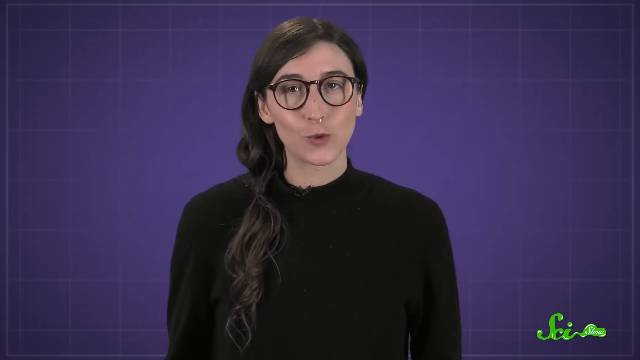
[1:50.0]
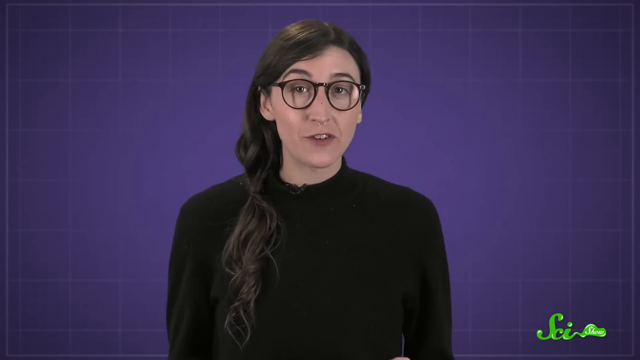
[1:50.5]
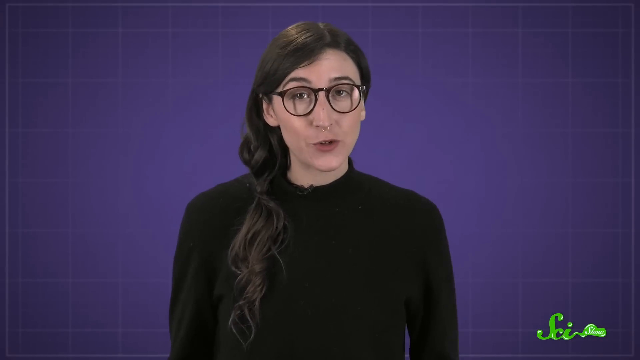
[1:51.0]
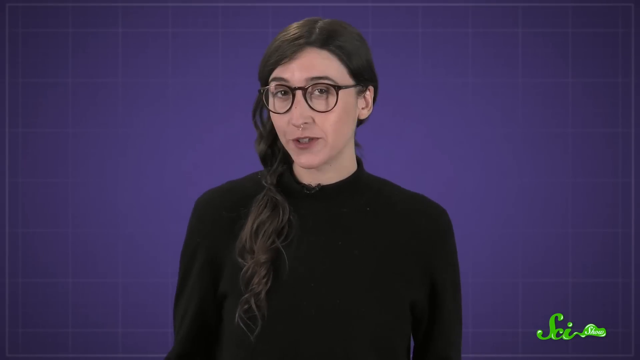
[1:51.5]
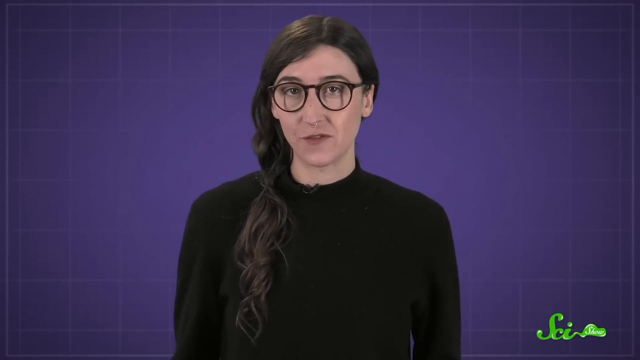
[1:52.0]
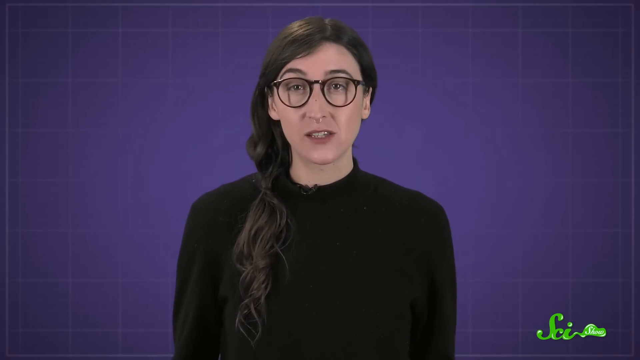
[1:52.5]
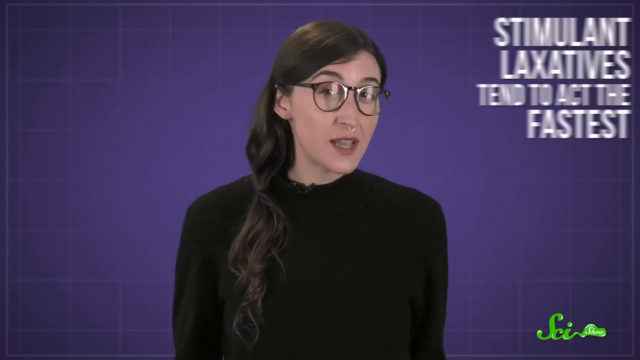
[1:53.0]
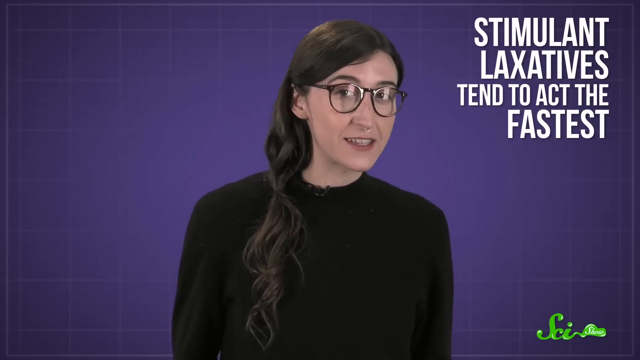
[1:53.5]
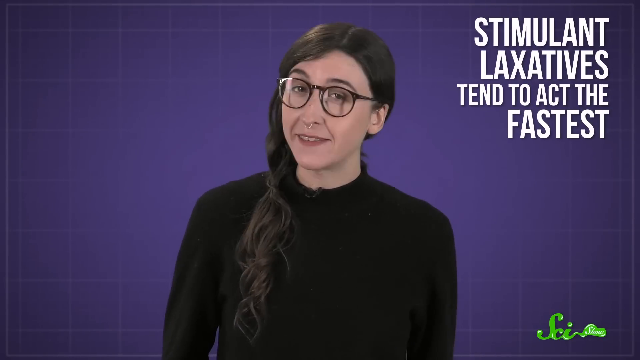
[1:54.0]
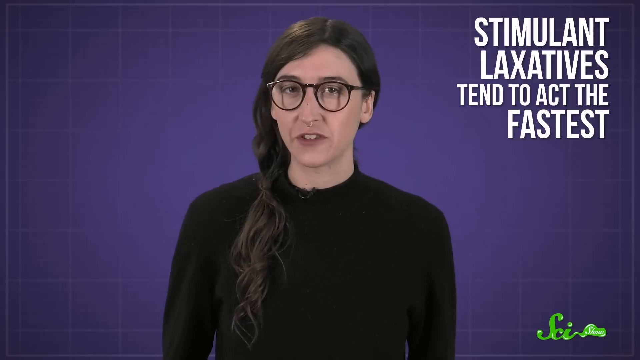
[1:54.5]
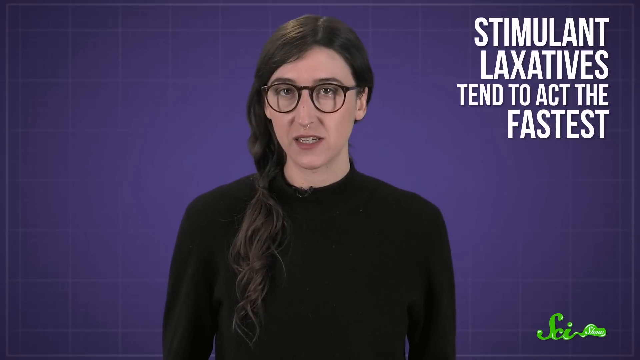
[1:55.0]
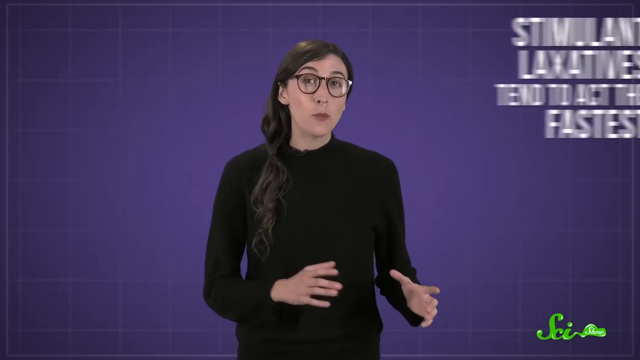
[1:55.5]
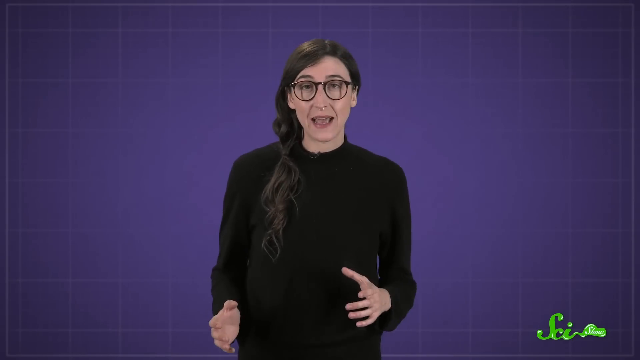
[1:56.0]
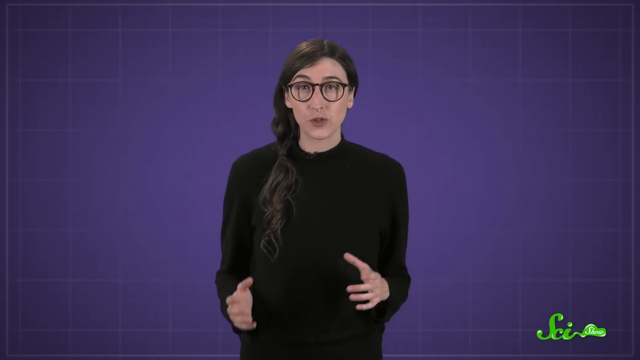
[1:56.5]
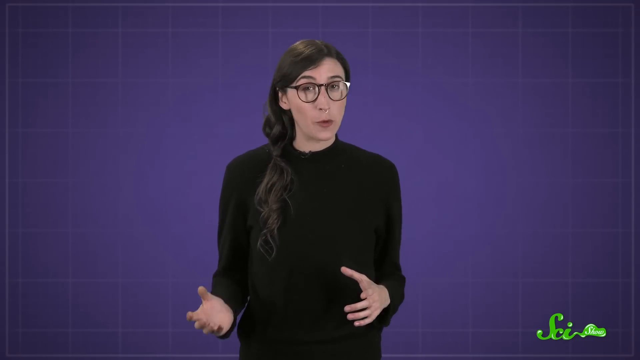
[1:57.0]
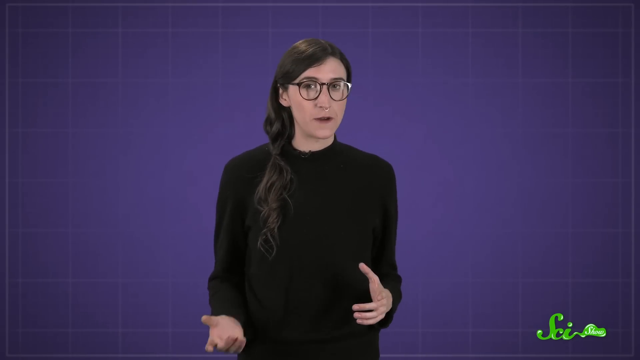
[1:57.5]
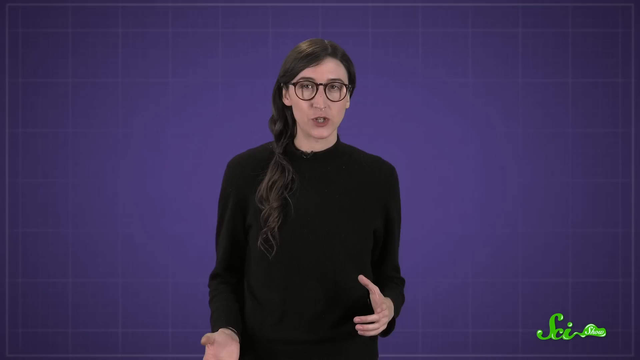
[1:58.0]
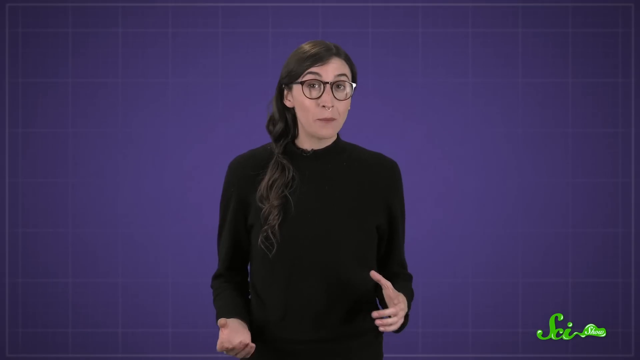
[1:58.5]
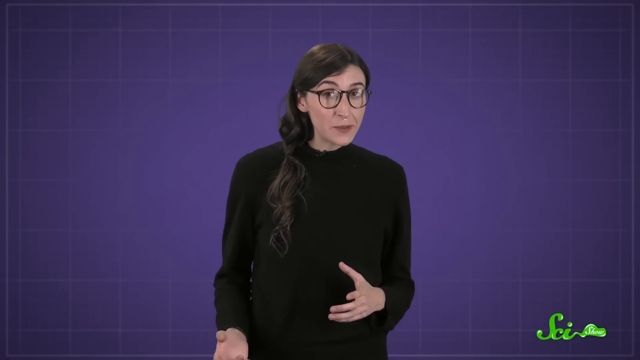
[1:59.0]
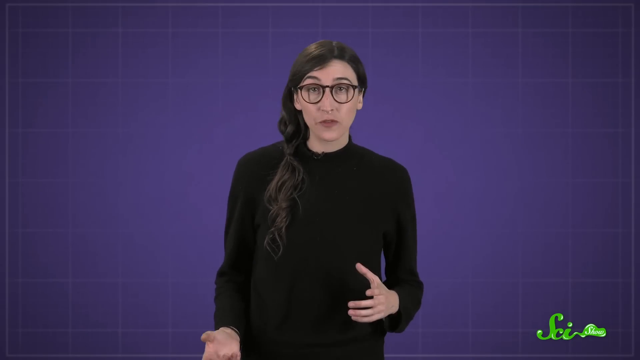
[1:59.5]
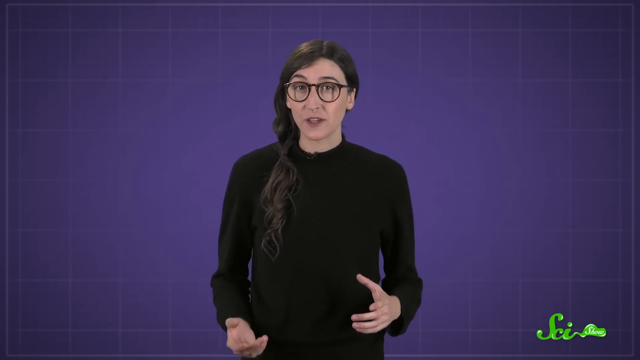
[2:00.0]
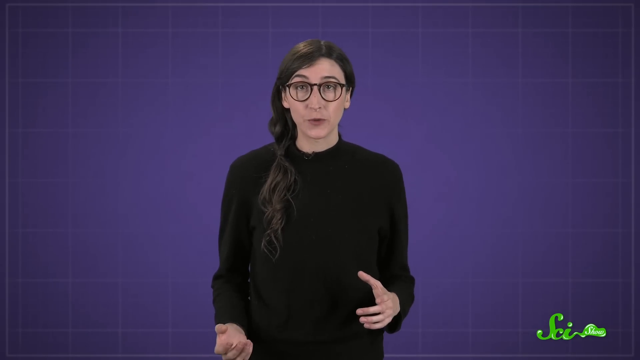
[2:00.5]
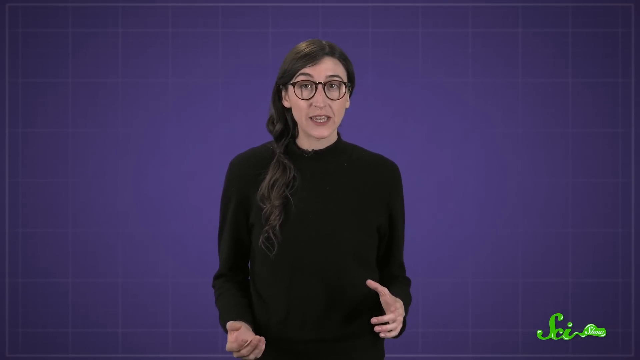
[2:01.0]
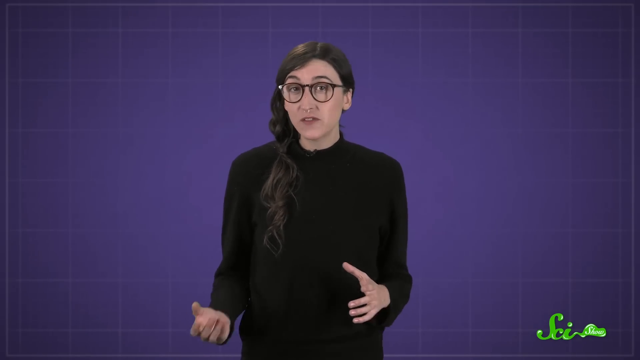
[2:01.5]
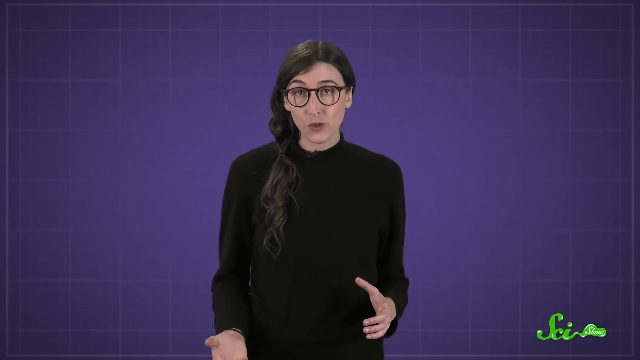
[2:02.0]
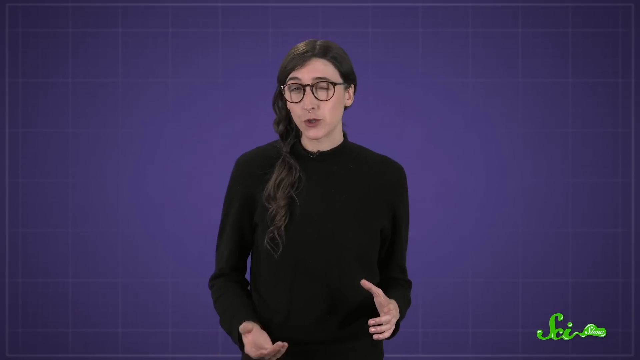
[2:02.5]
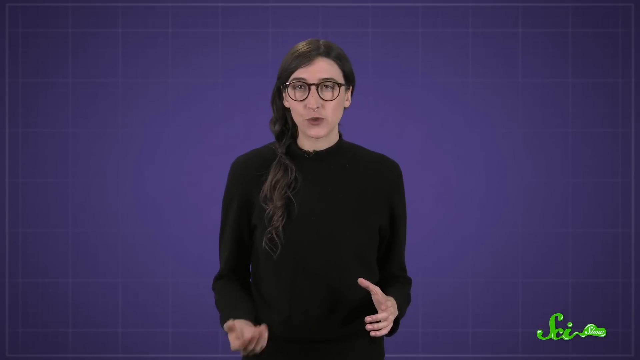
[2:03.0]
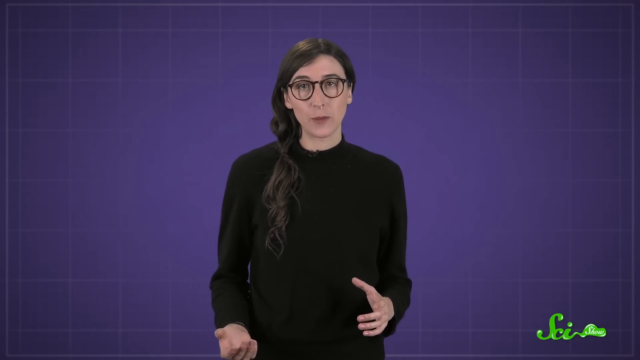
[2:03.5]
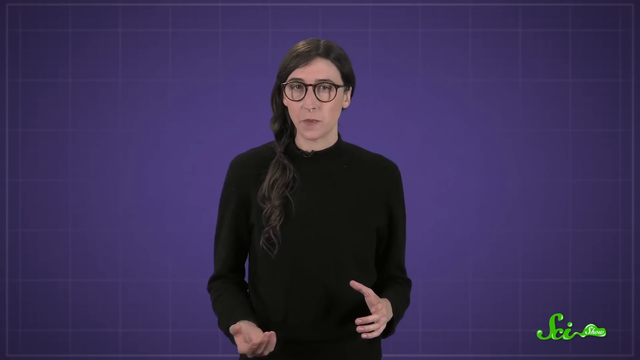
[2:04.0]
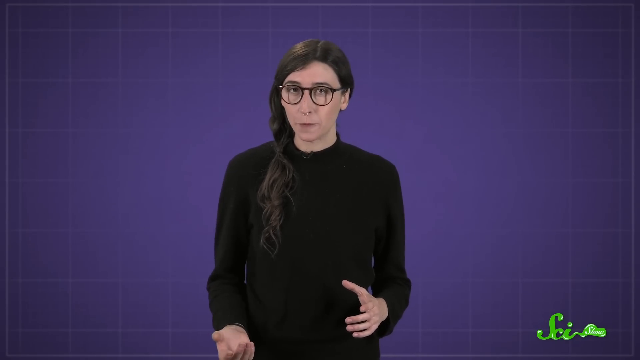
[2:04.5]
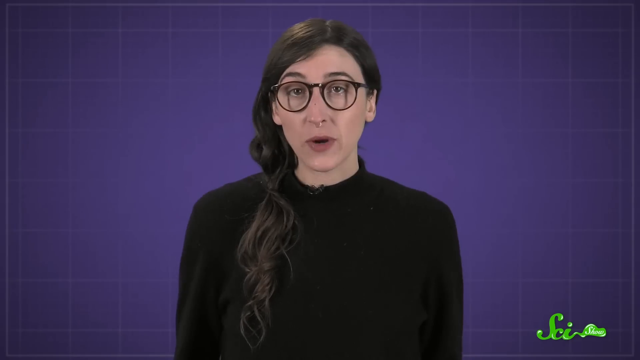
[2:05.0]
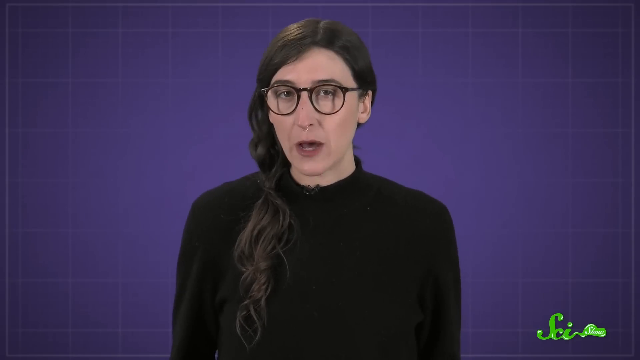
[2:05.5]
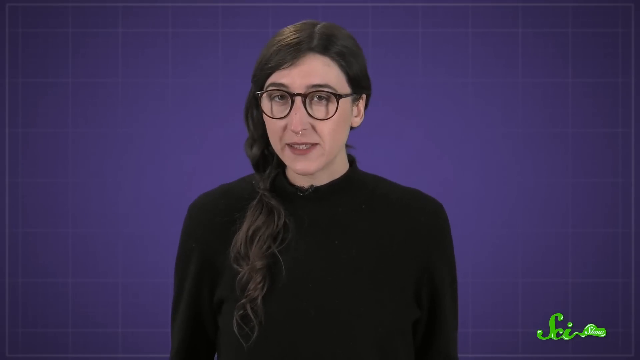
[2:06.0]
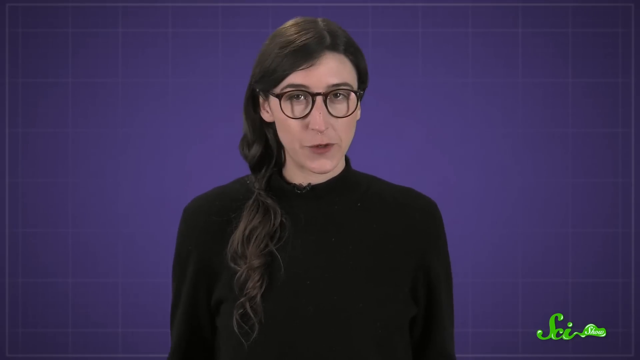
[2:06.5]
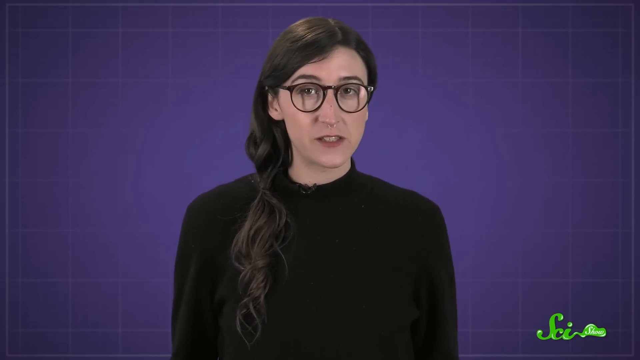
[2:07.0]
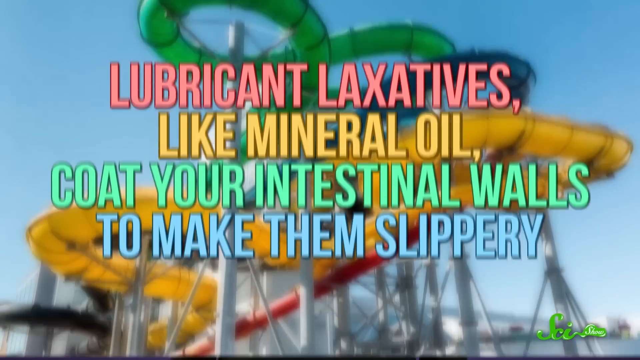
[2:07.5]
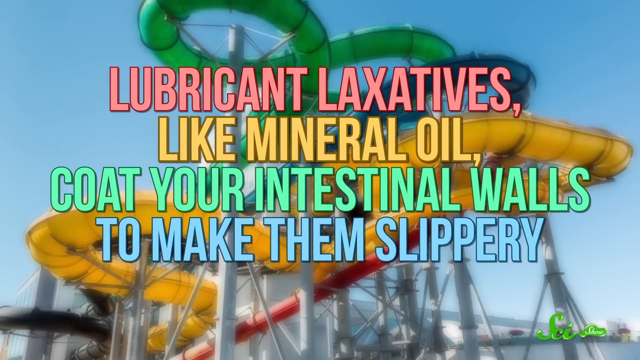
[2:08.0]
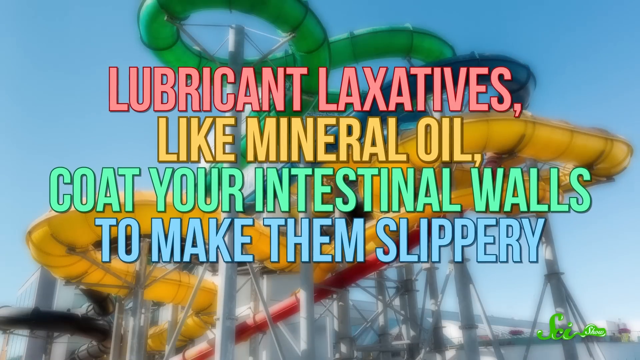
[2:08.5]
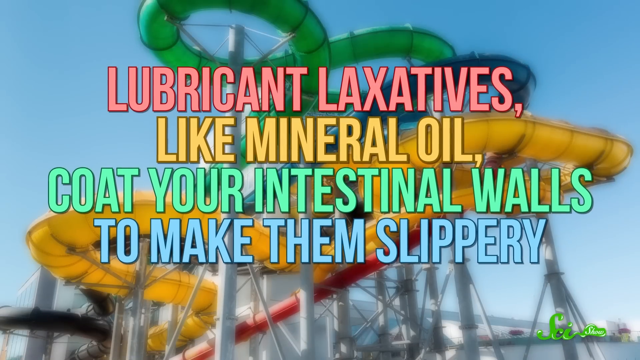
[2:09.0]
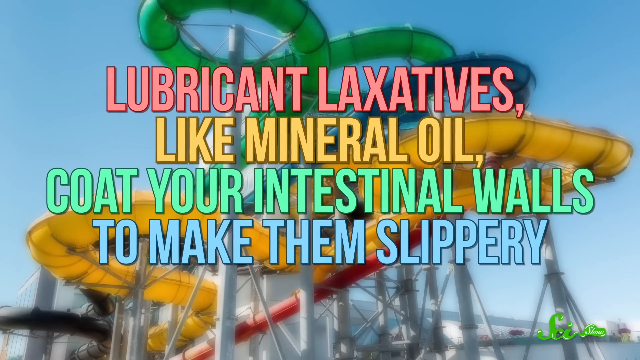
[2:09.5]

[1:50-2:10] The woman is speaking as on-screen text reads "stimulant laxatives tend to act the fastest" and "Lubricant laxatives like mineral oil coat your intestinal walls to make them slippery."